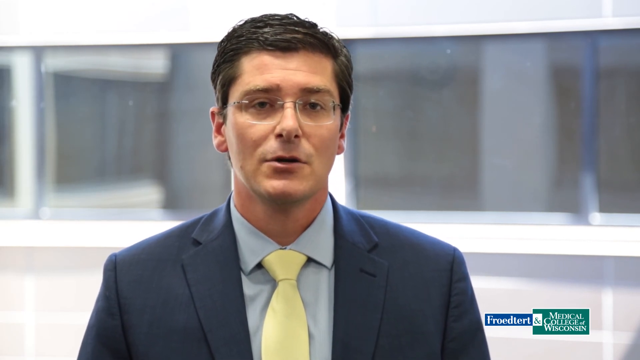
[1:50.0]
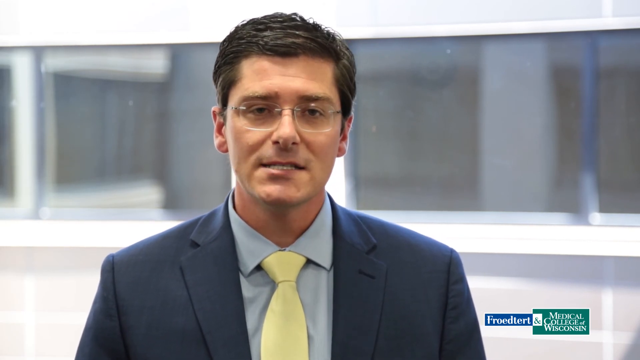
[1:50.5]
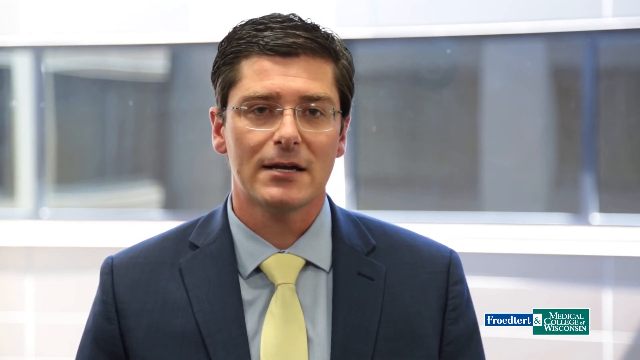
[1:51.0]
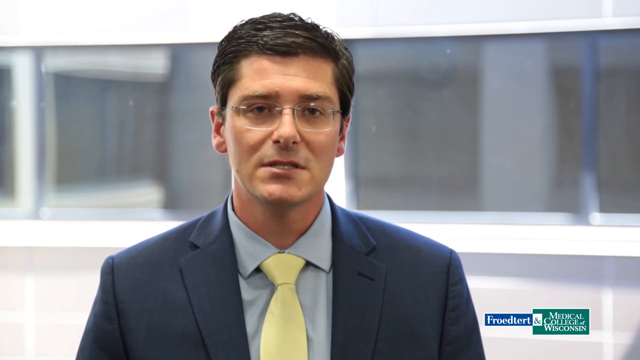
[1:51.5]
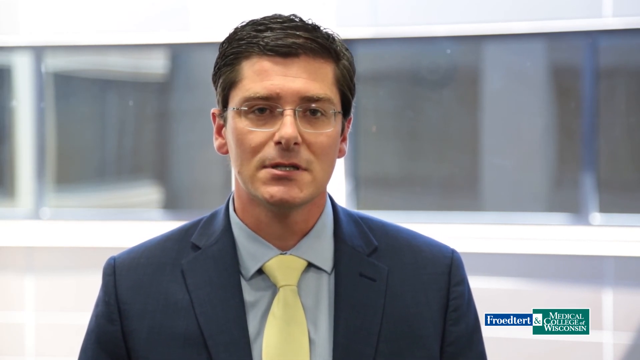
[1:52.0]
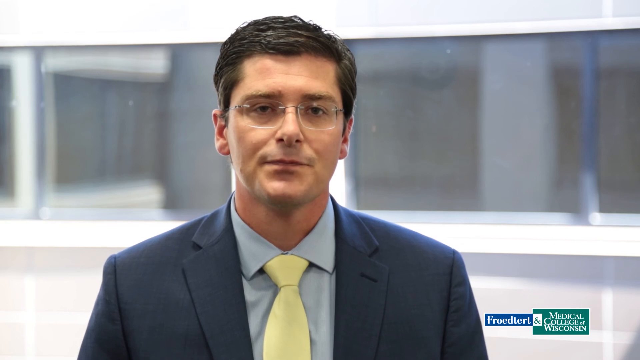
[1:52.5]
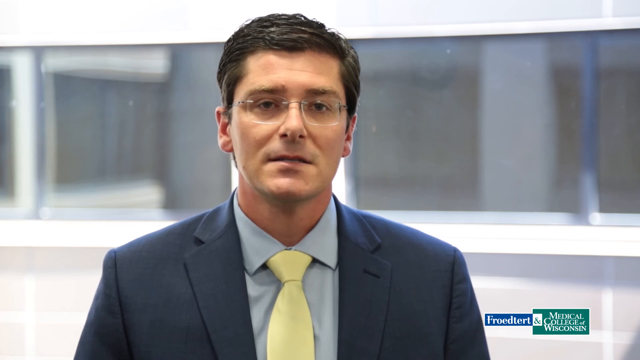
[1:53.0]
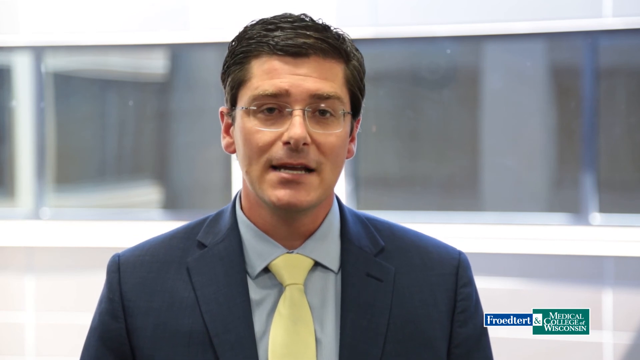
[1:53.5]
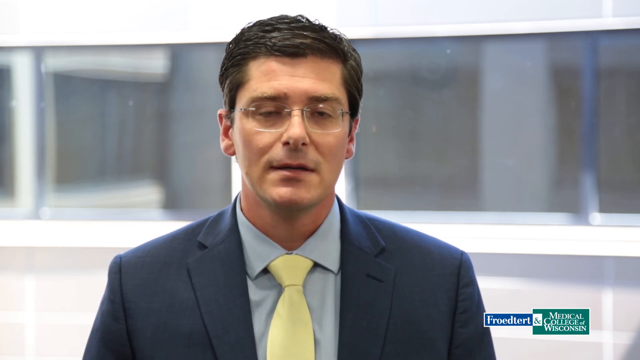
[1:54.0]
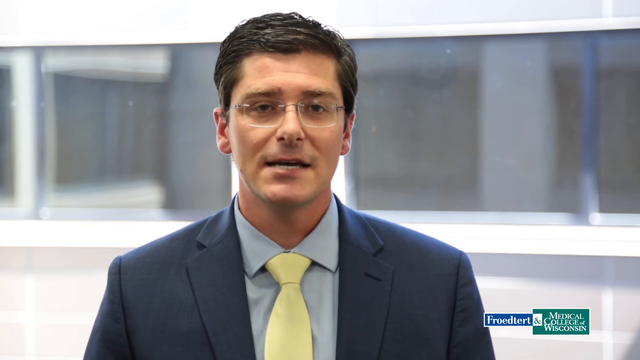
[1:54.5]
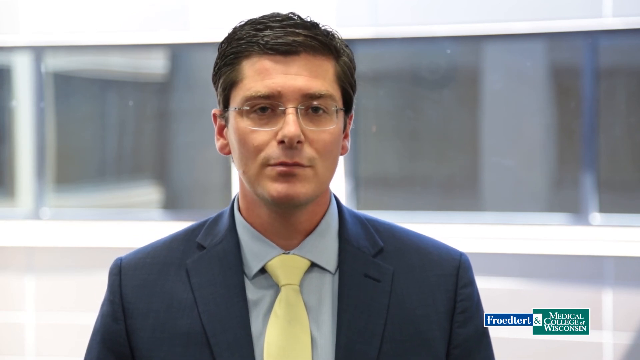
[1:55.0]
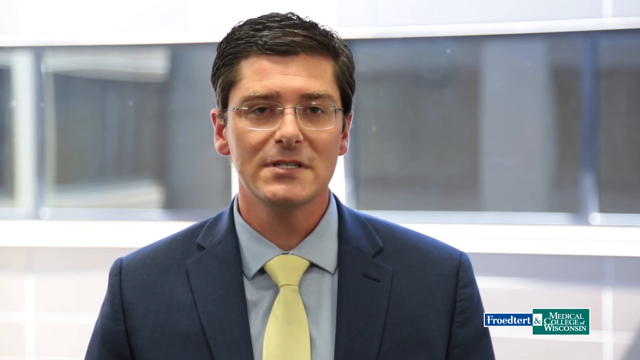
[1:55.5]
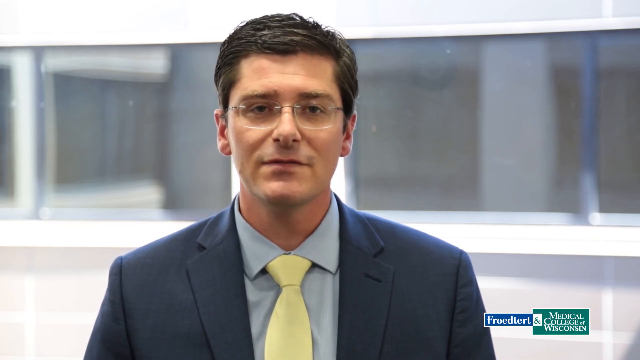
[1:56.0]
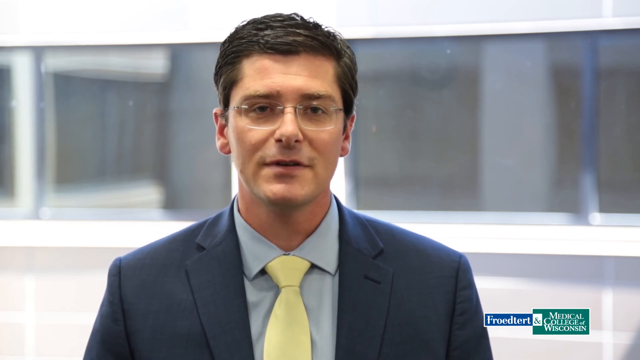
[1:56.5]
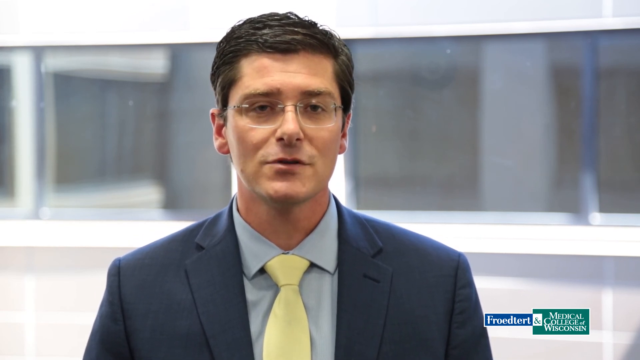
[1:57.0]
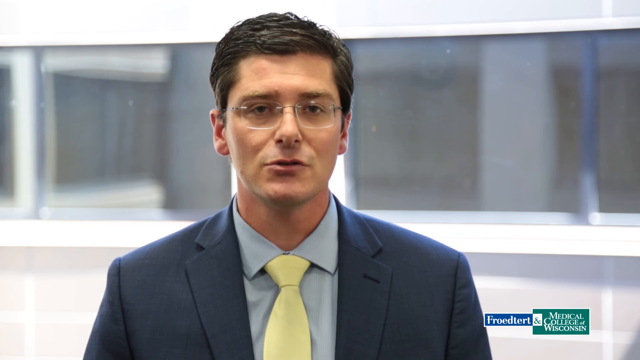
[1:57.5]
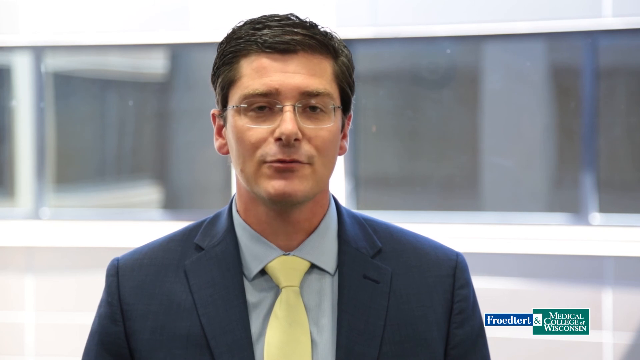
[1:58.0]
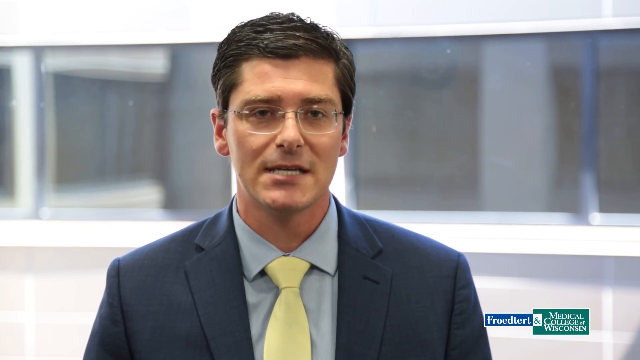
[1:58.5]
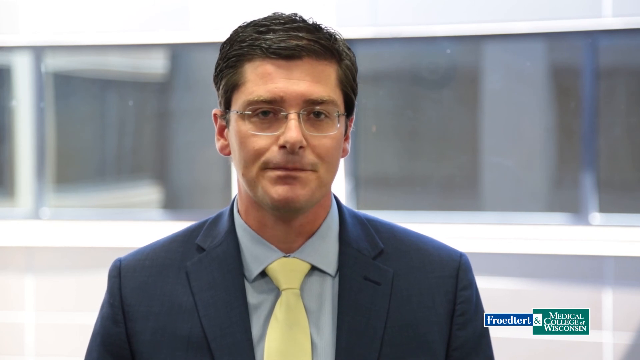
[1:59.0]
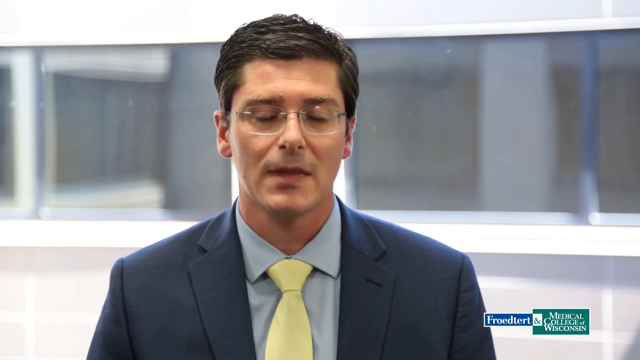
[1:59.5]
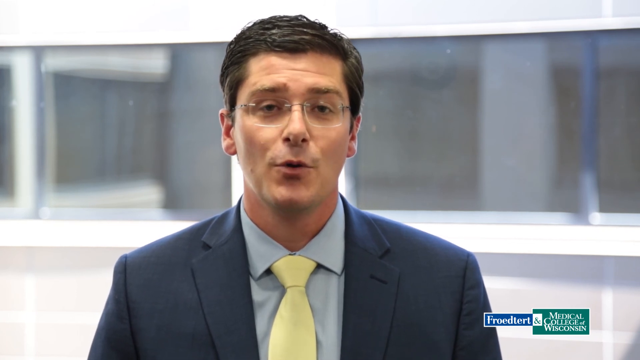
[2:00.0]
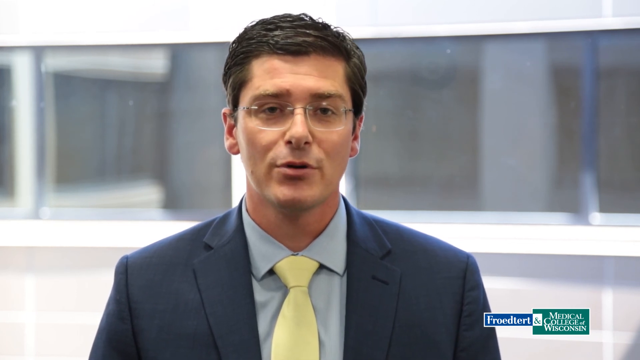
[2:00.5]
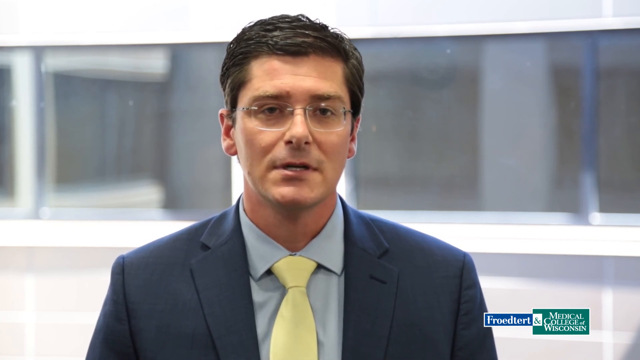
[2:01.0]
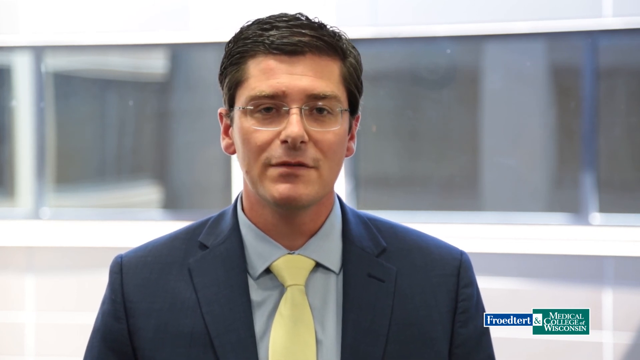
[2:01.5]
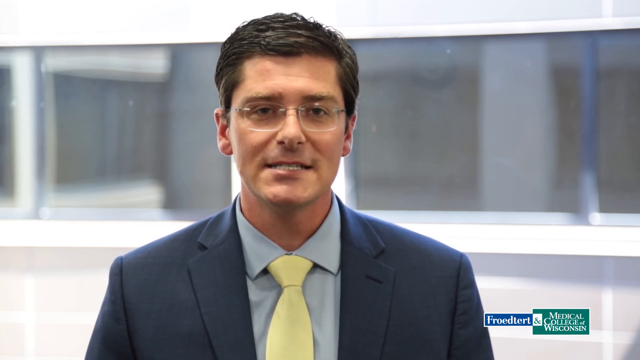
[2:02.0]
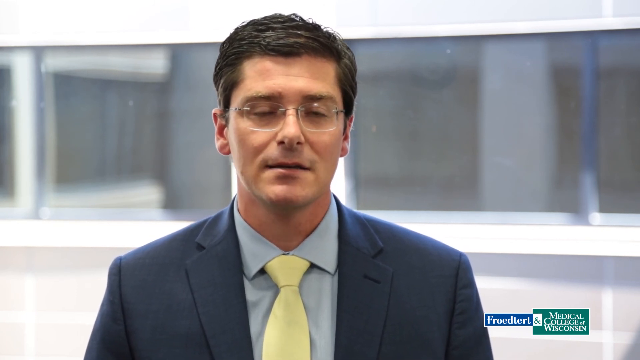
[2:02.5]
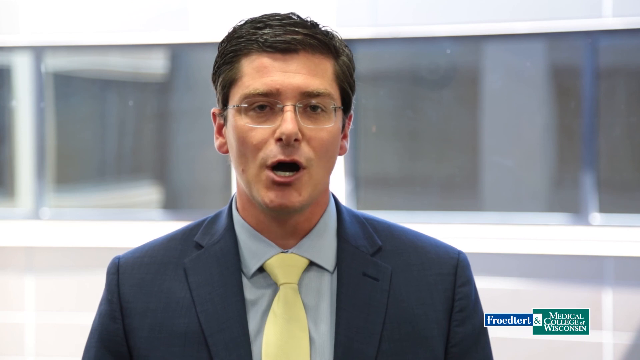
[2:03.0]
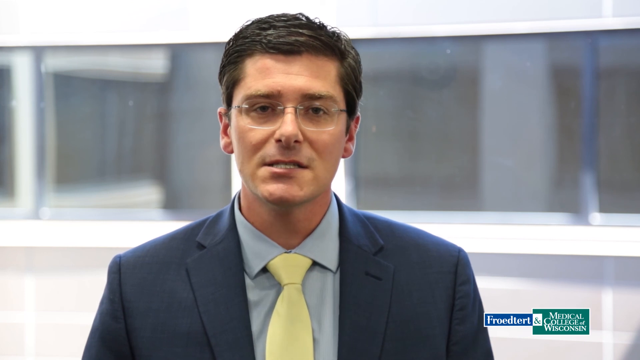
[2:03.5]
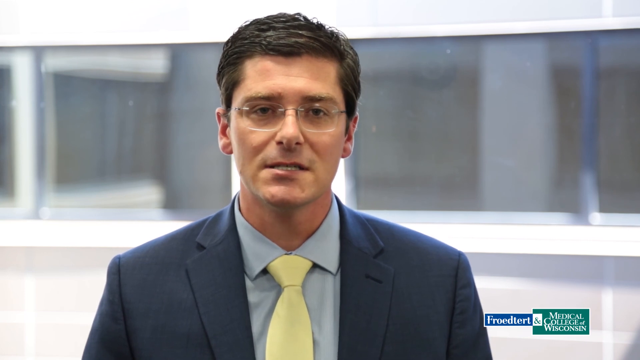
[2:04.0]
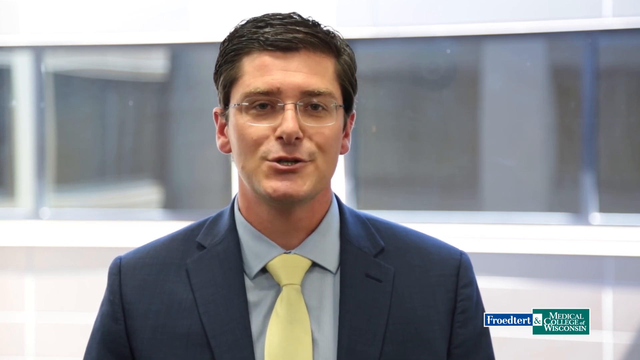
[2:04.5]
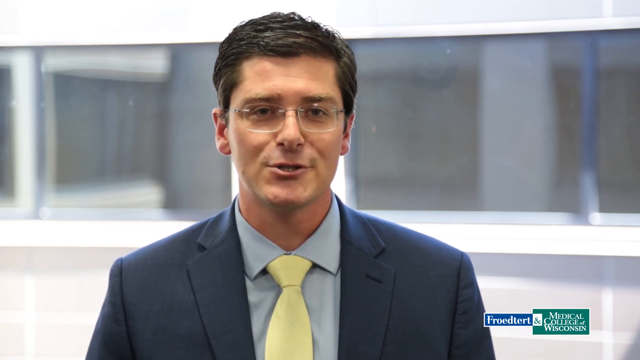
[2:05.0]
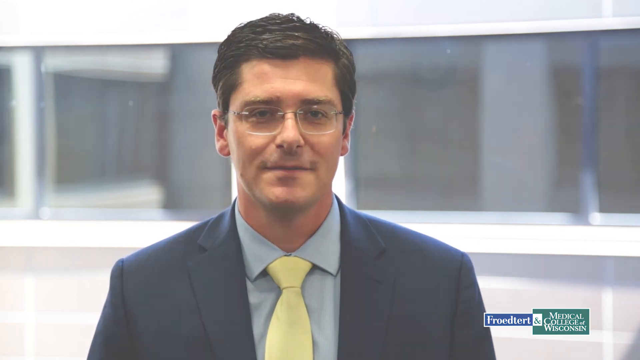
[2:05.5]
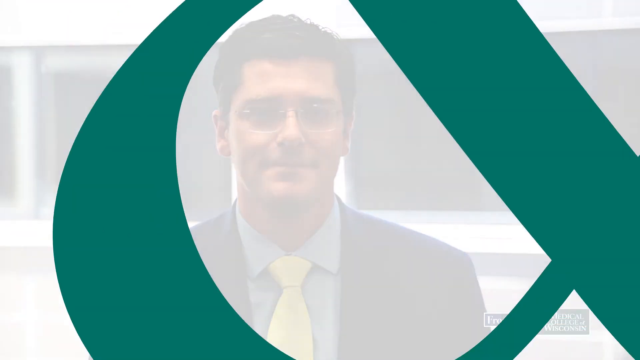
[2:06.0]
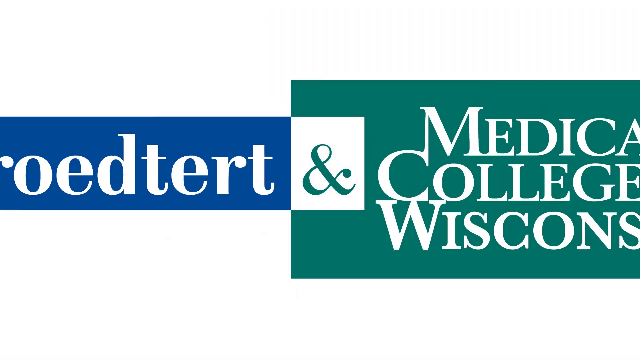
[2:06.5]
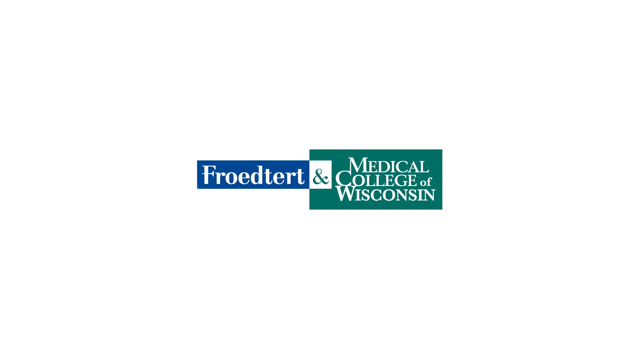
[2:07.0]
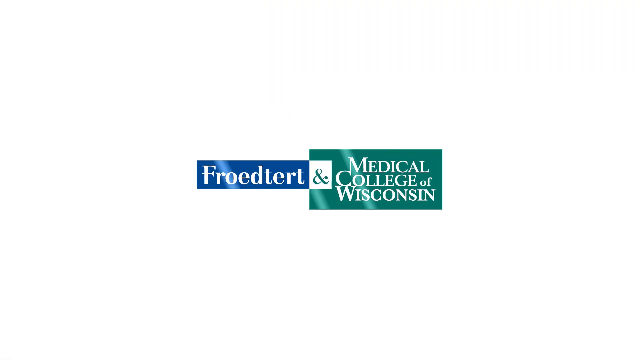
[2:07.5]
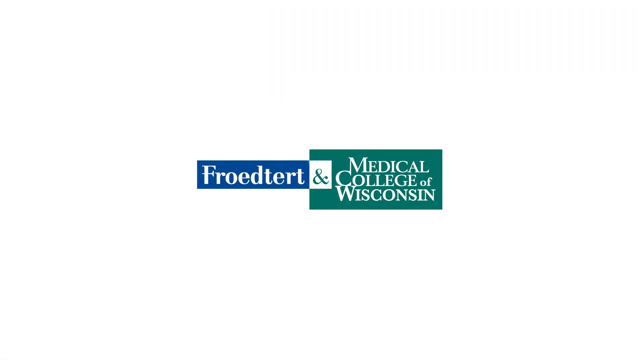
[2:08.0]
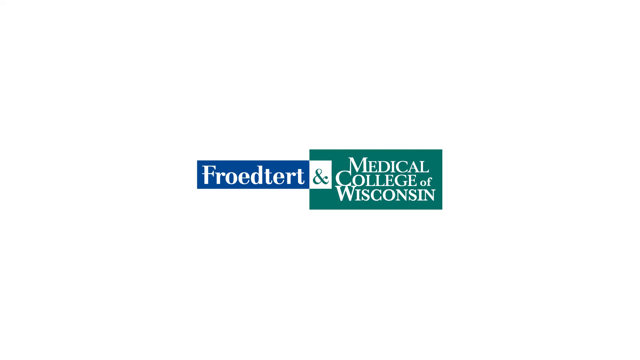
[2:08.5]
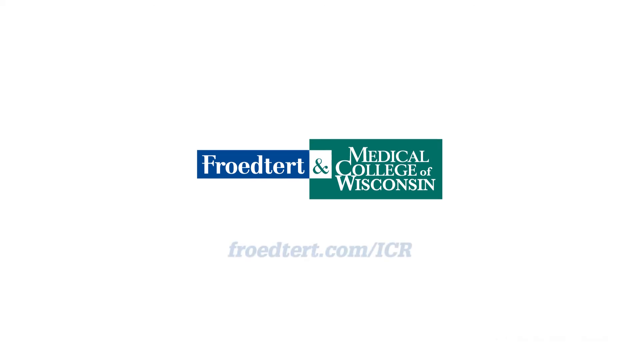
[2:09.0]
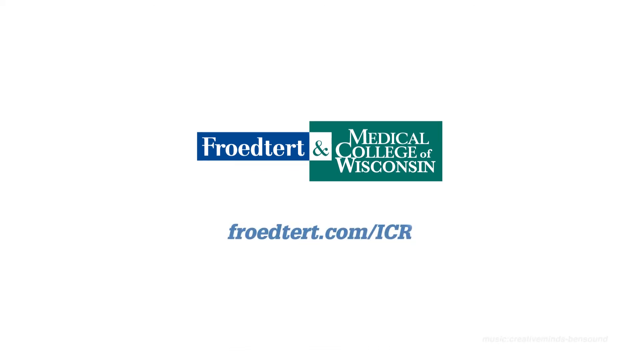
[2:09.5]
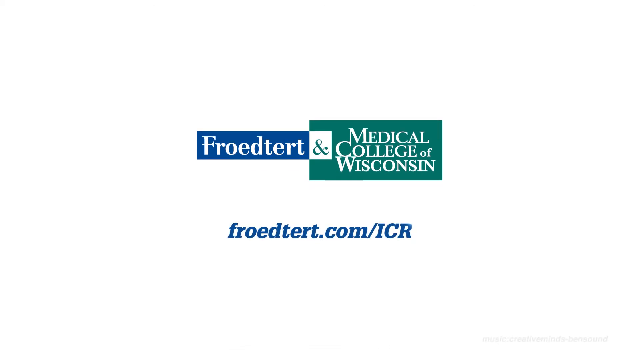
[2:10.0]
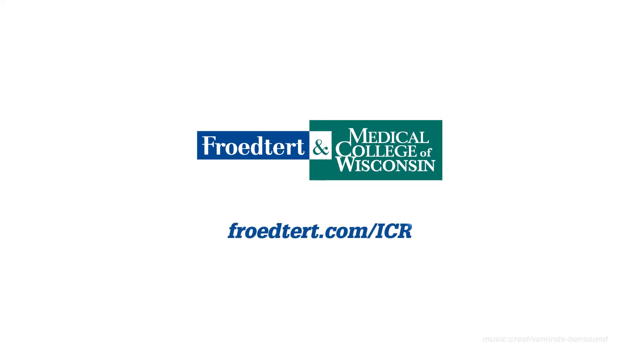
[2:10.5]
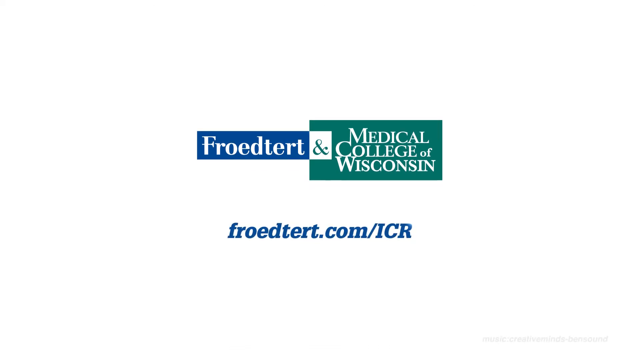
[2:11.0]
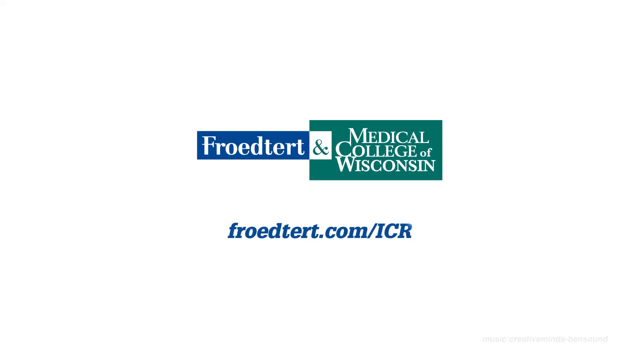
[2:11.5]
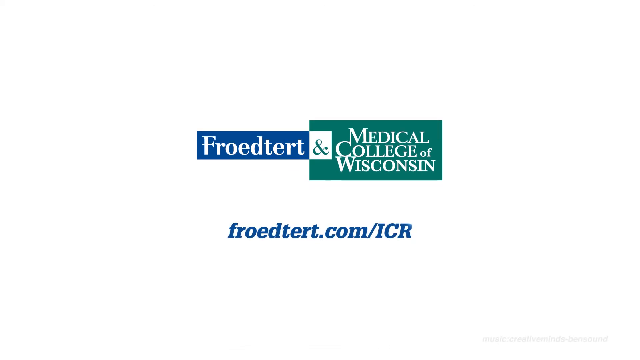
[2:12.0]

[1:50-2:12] The video returns to the man with his back toward a building with two dark painted windows, where the reflection and the ledge are visible. A teal Medical School of Wisconsin label appears in the bottom right corner. The same dark-haired man, with a very dark complexion, continues talking. He wears a dark navy blue suit, a light blue undershirt with the collar folded, a yellow or light-colored tie running down the front, and small wire-rimmed glasses. At the end, the video shows the Medical School of Wisconsin green logo on a mostly solid gray background, with website information posted below.